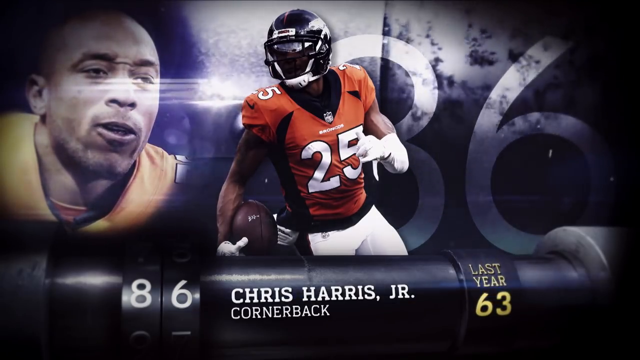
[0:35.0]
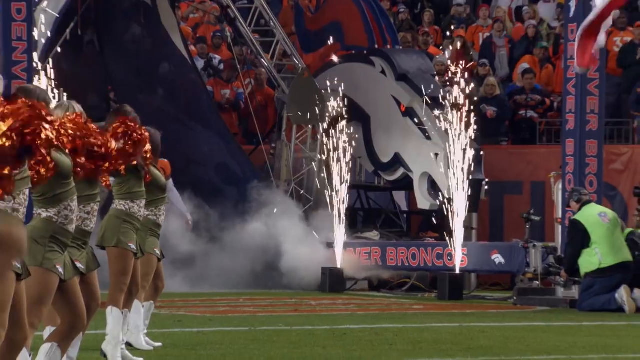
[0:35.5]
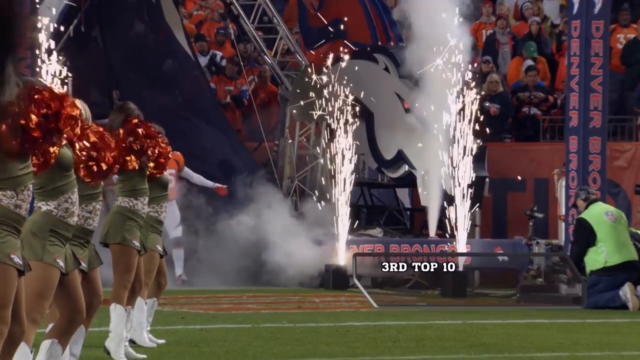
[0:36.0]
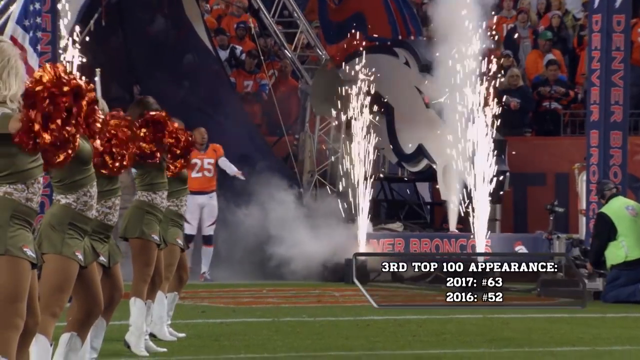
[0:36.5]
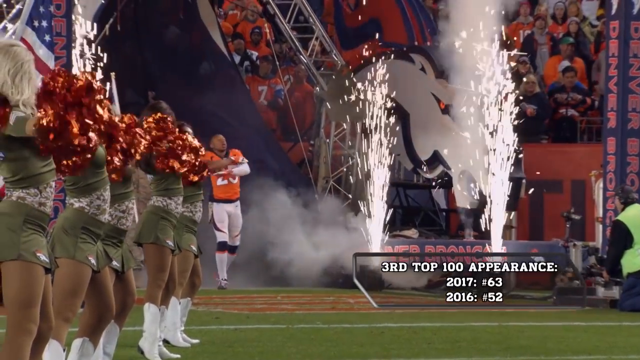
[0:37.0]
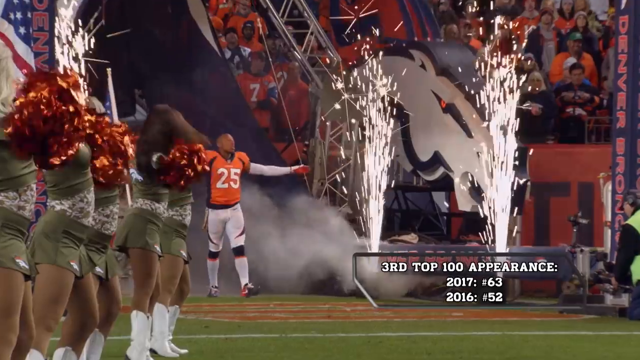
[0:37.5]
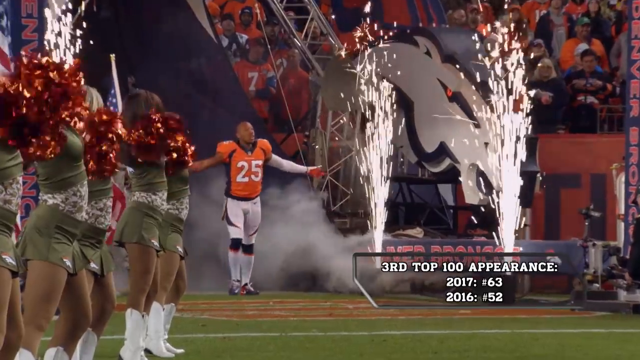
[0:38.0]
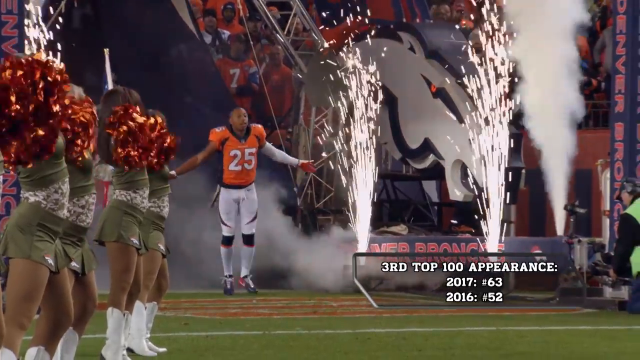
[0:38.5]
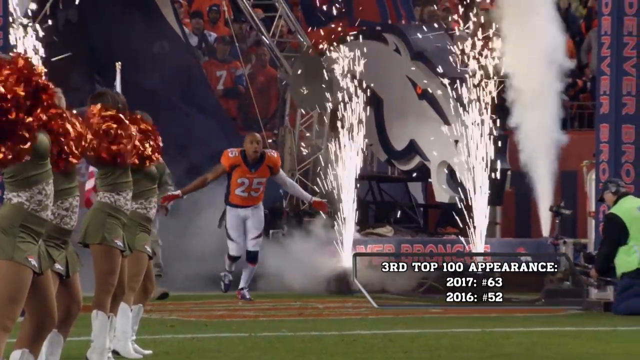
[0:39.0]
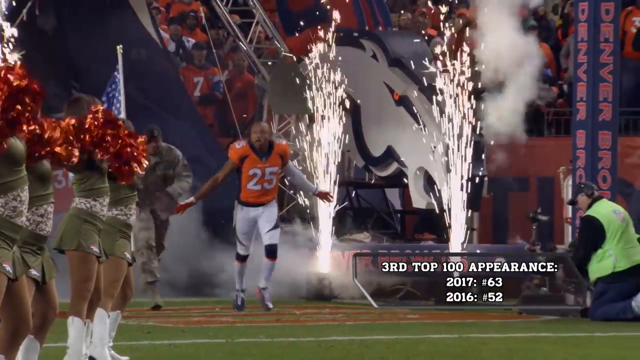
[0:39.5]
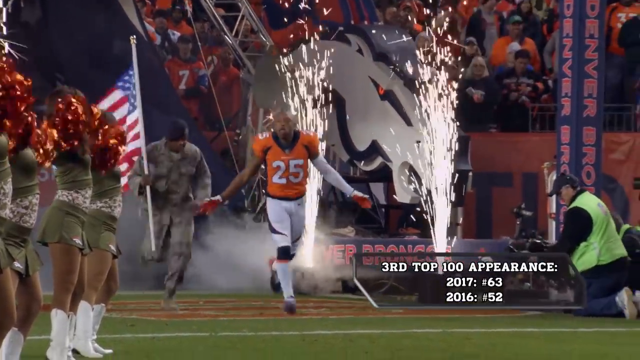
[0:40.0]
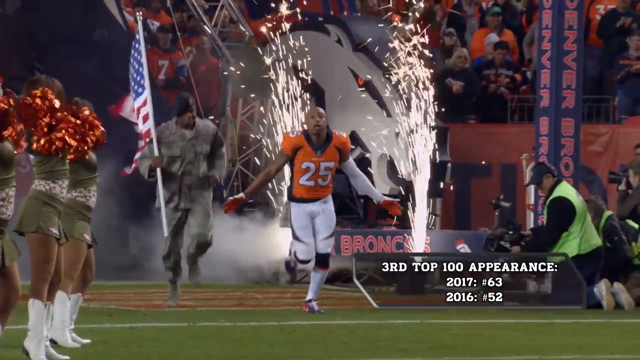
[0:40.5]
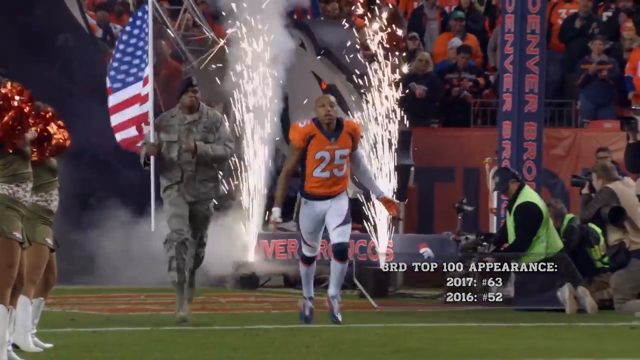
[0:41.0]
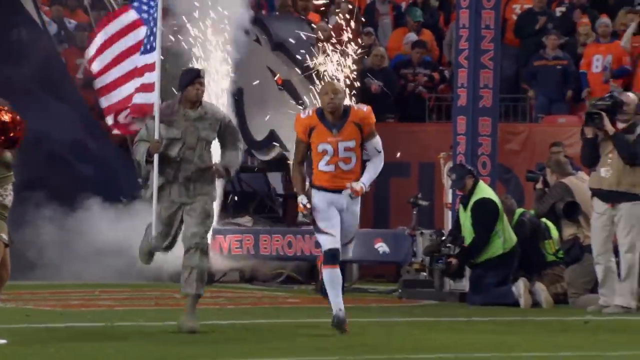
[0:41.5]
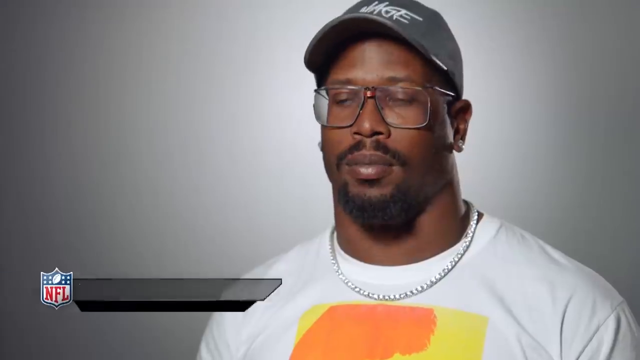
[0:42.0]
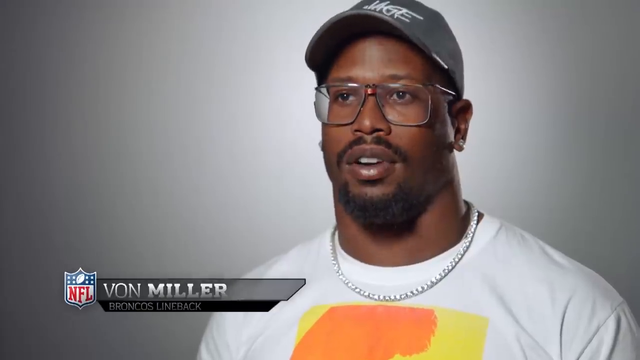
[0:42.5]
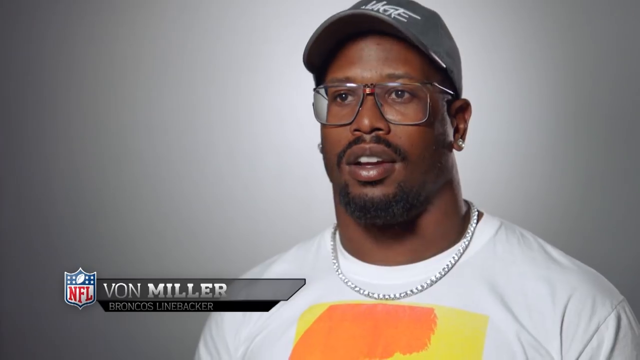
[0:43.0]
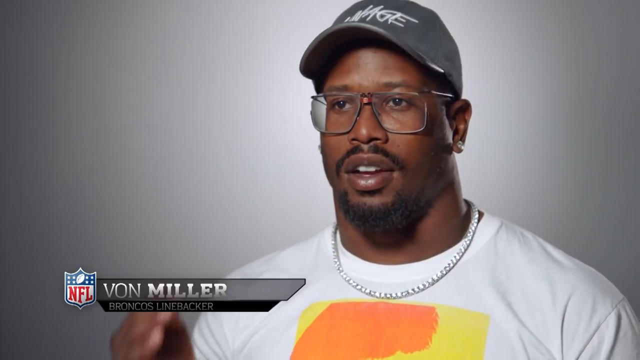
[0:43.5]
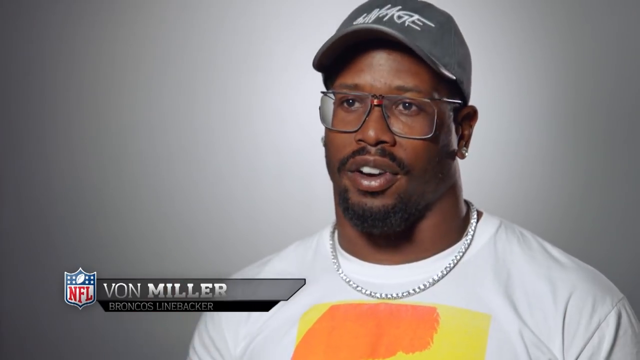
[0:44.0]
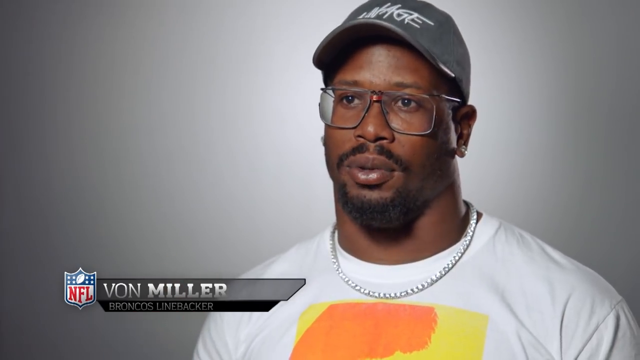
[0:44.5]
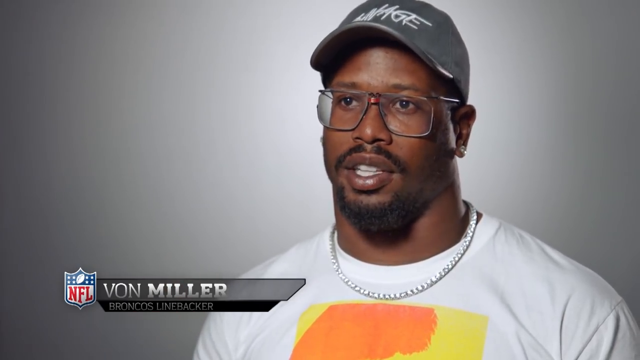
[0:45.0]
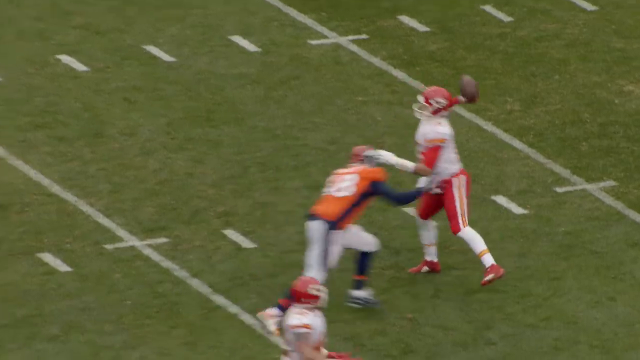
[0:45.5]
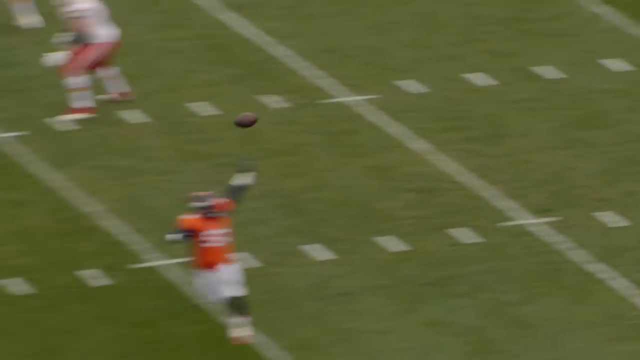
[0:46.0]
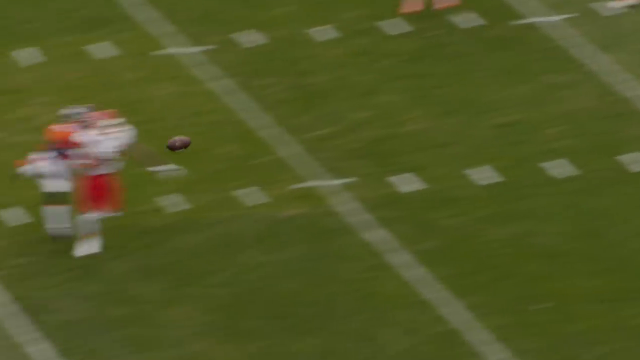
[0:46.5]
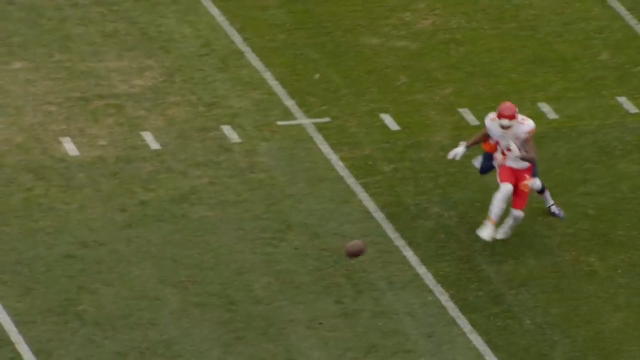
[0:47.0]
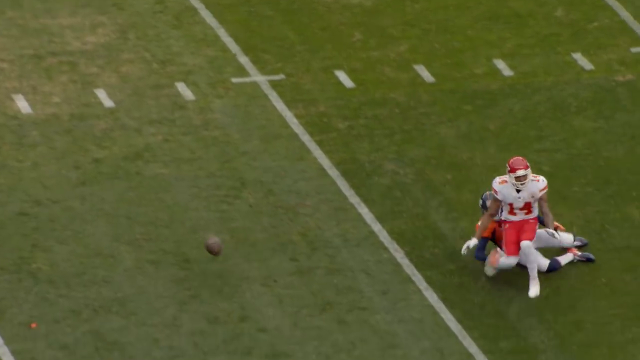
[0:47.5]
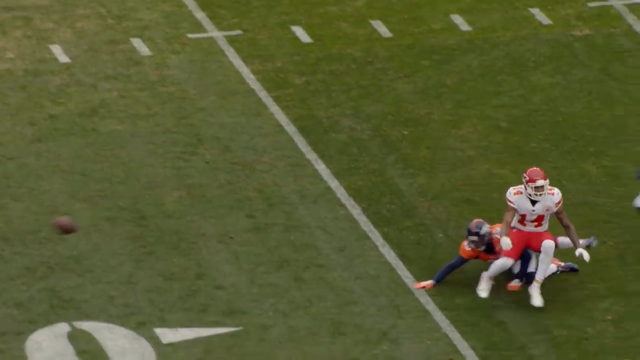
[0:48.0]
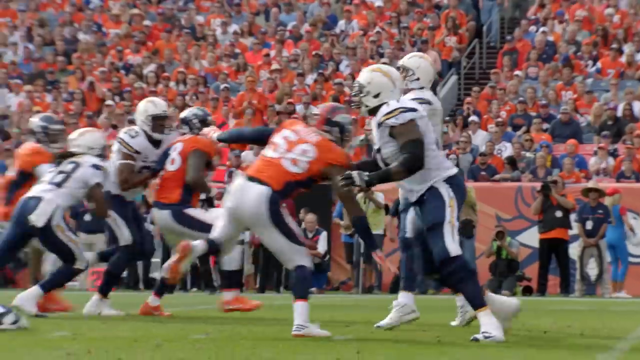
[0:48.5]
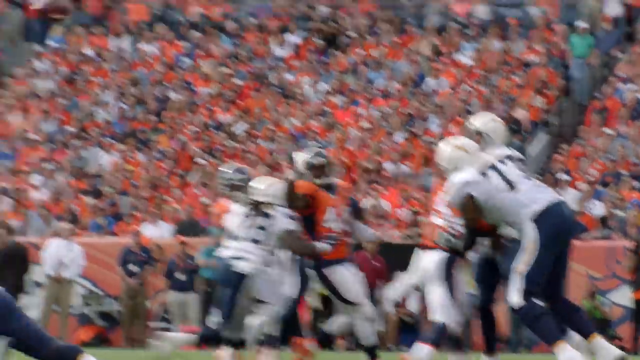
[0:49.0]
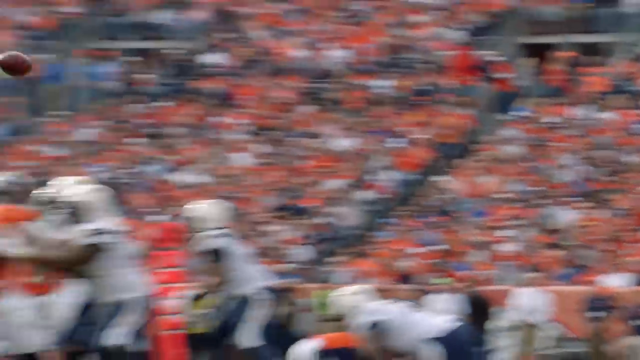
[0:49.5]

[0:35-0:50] Chris Harris Jr., wearing number 25 in an orange jersey with white pants, walks from the tunnel onto the field of the Denver Broncos stadium. The crowd all wear orange jerseys, and sparklers or fireworks go off. A group of cheerleaders wear green skirts with green tops and white cowboy boots, with the Denver Broncos logo on their skirts and orange pom-poms. An American flag is visible. On-screen text reads "third top 100 appearance" and lists "2017, number 63" and "2016, number 52". Harris Jr. runs out onto the field with someone in an army outfit holding the American flag behind him. The video cuts to Von Miller, with "Broncos linebacker" under his name, wearing a white t-shirt, a diamond chain, glasses and a baseball hat and talking into the camera, presumably about Chris Harris Jr. At the very end it cuts to a game clip.